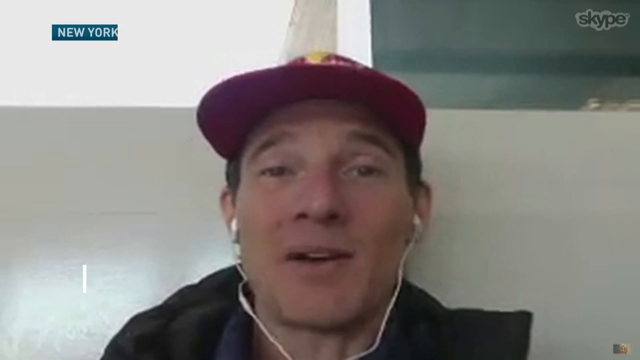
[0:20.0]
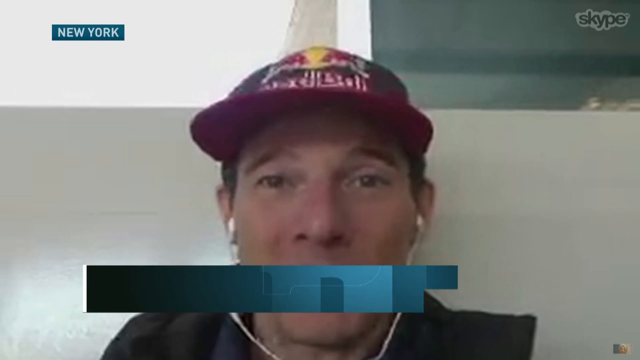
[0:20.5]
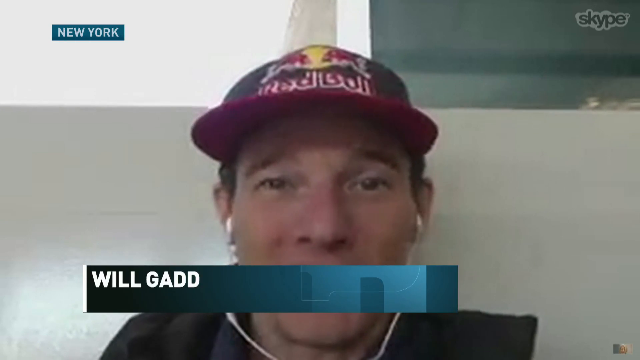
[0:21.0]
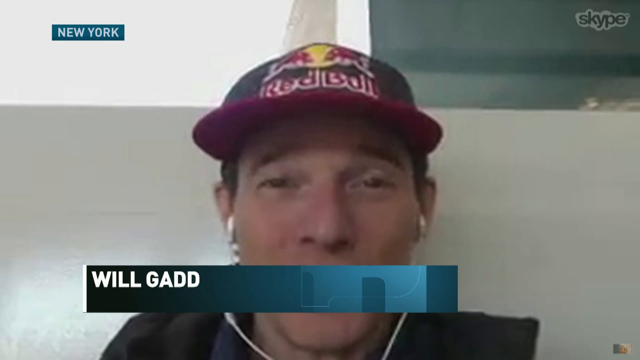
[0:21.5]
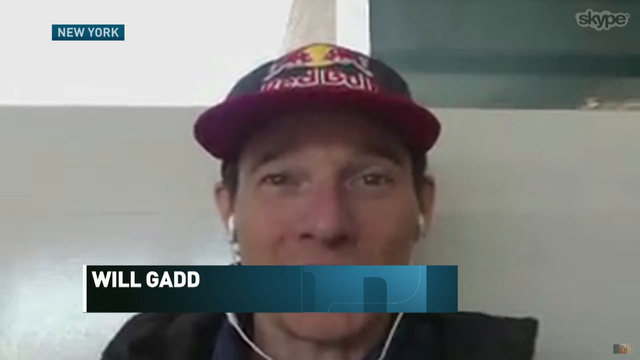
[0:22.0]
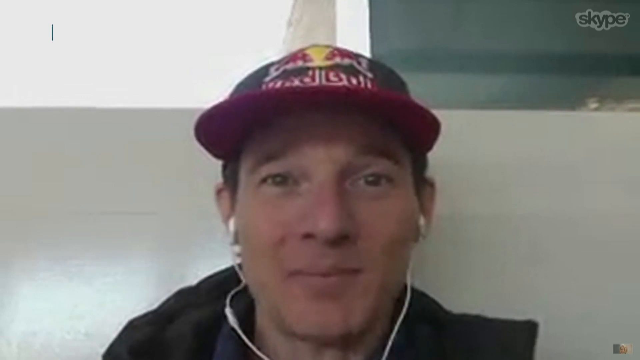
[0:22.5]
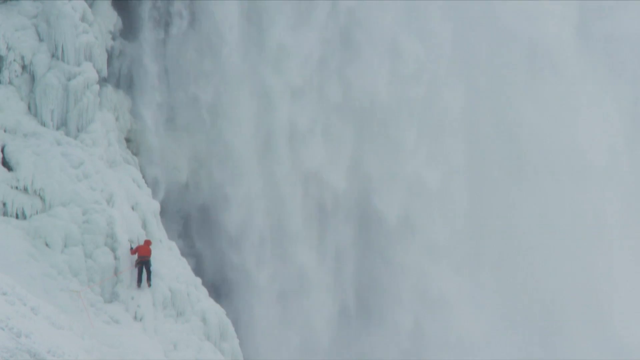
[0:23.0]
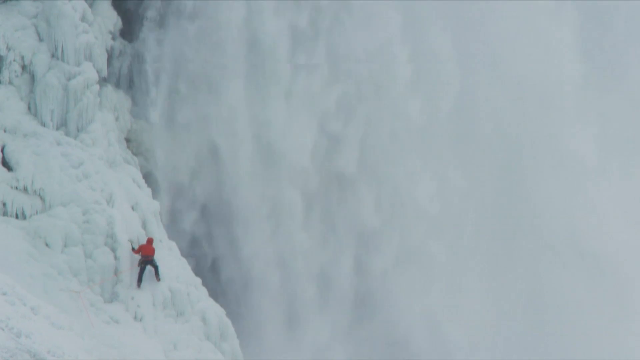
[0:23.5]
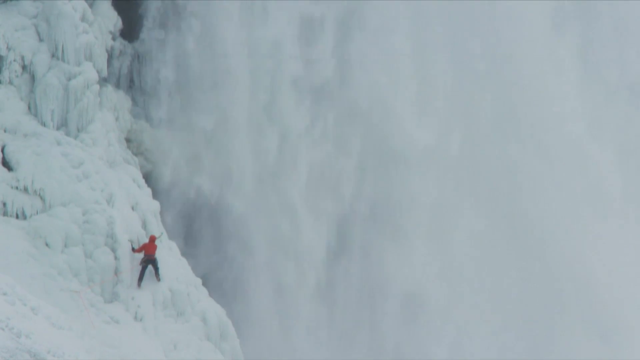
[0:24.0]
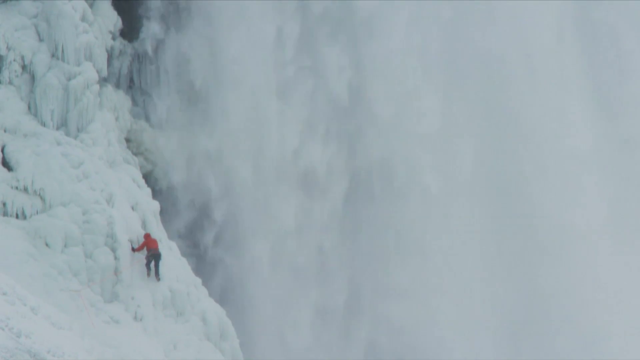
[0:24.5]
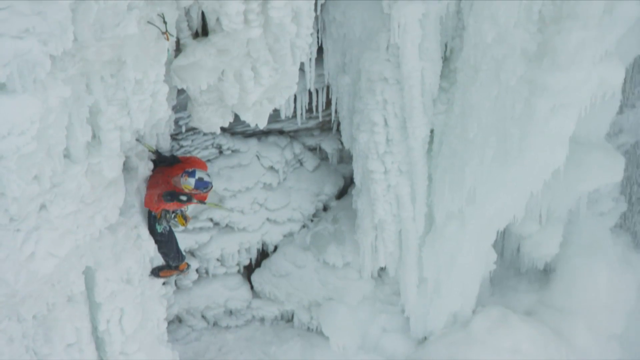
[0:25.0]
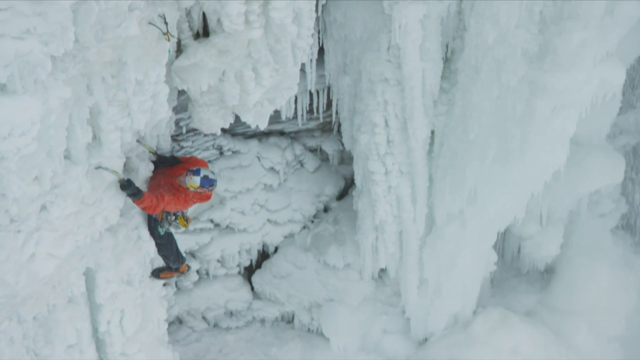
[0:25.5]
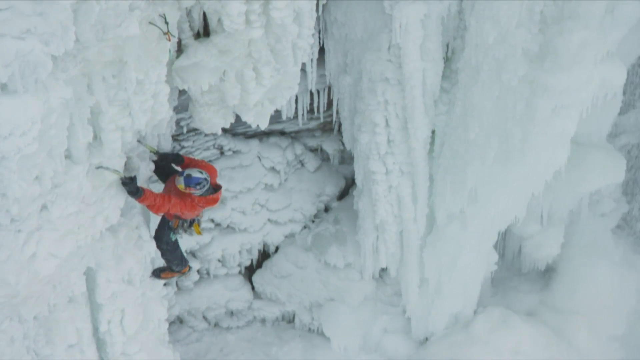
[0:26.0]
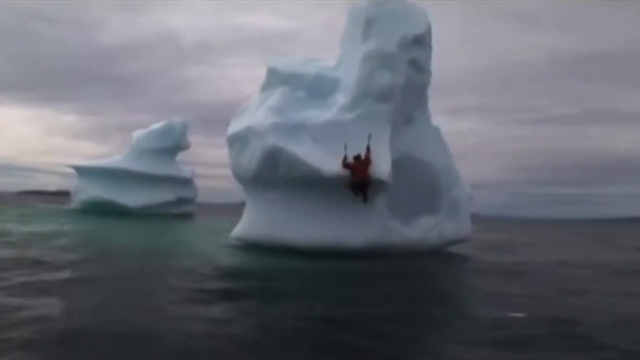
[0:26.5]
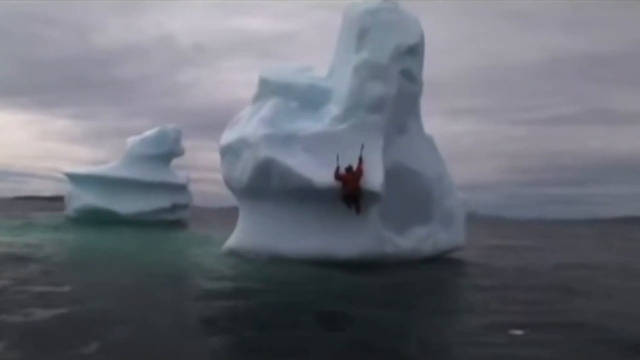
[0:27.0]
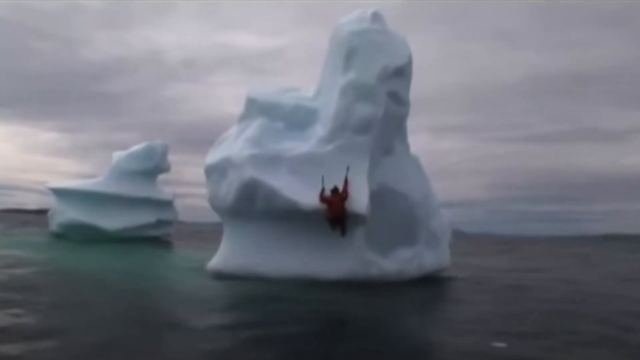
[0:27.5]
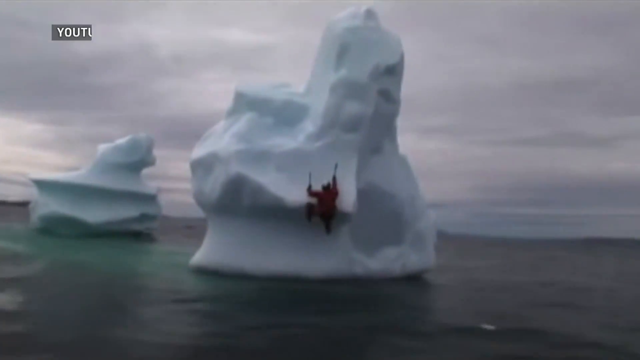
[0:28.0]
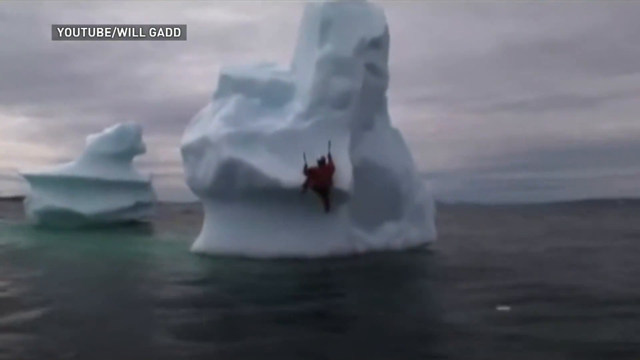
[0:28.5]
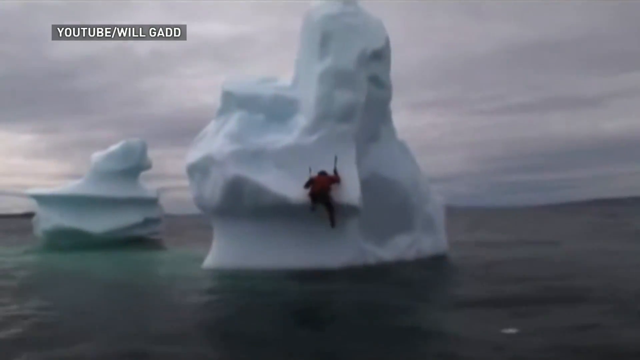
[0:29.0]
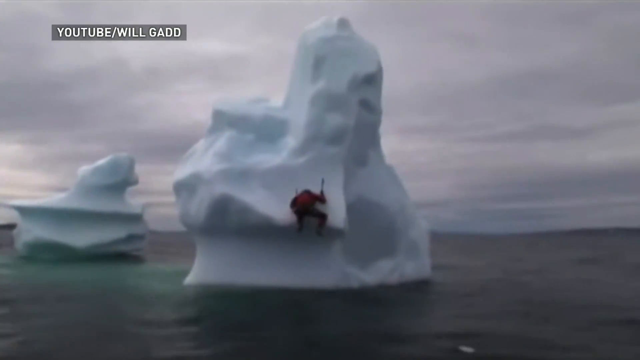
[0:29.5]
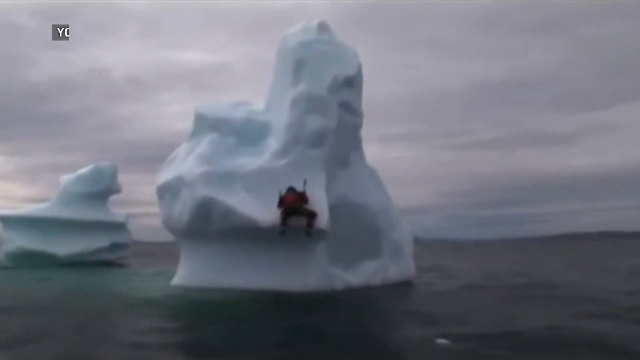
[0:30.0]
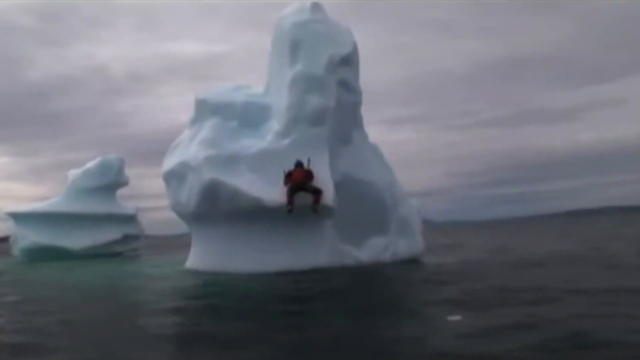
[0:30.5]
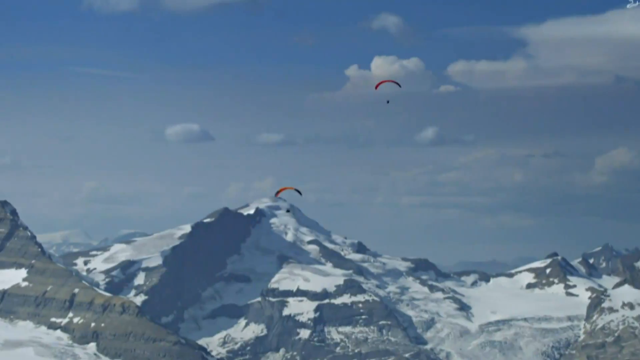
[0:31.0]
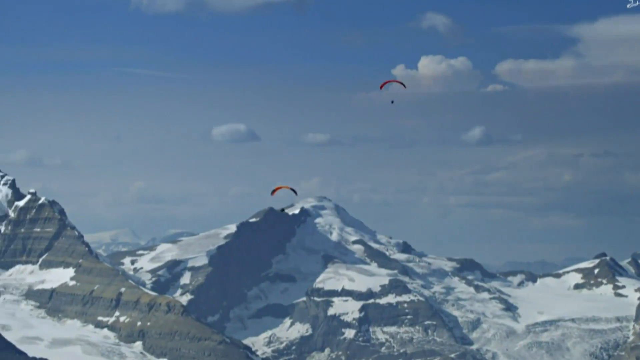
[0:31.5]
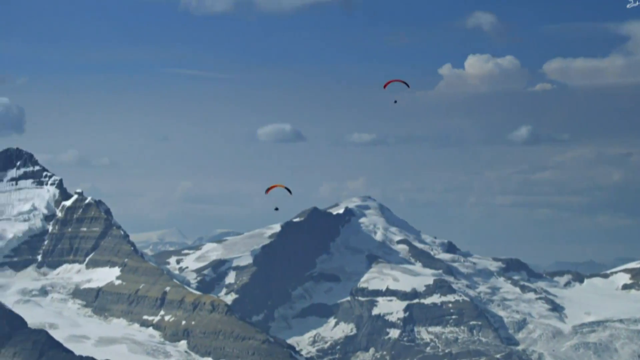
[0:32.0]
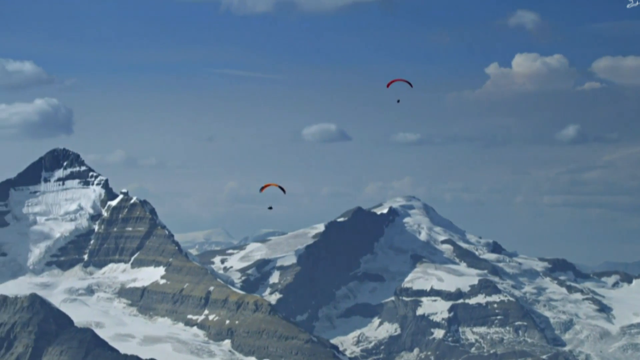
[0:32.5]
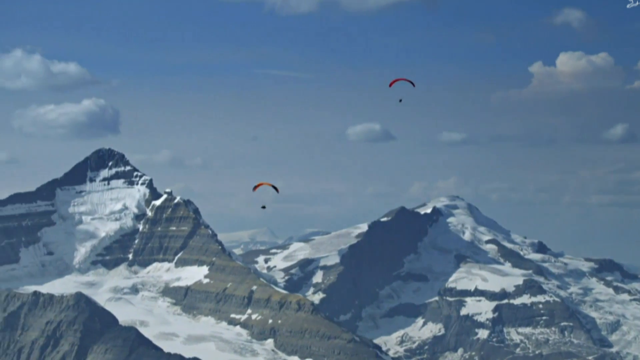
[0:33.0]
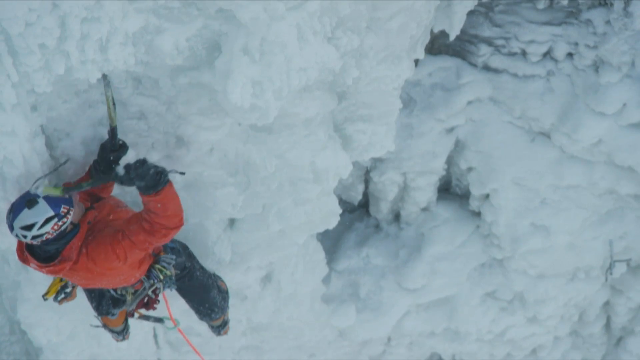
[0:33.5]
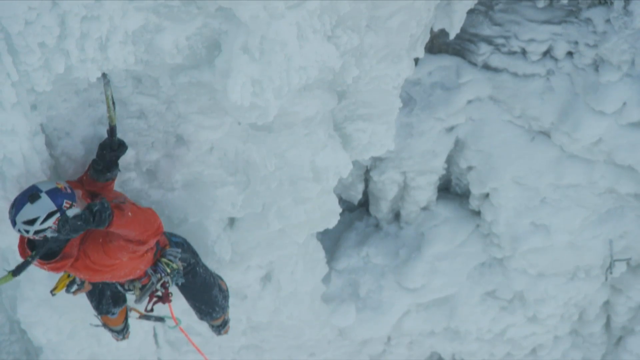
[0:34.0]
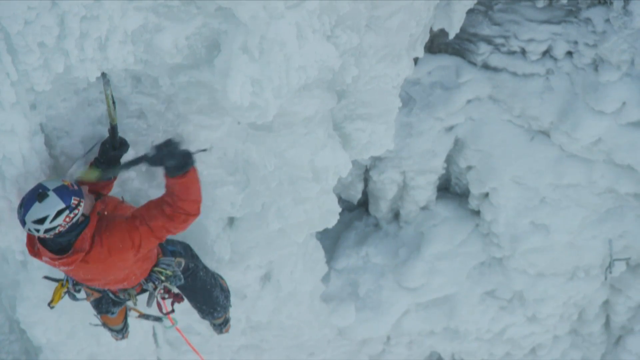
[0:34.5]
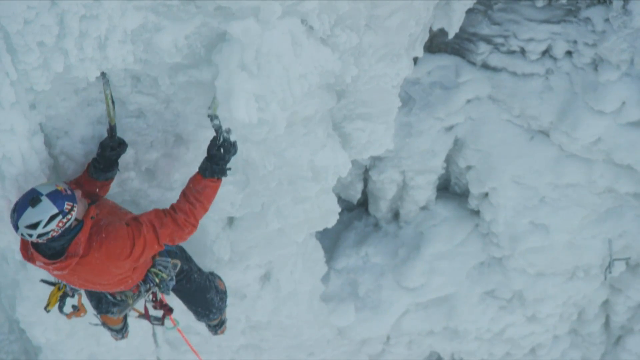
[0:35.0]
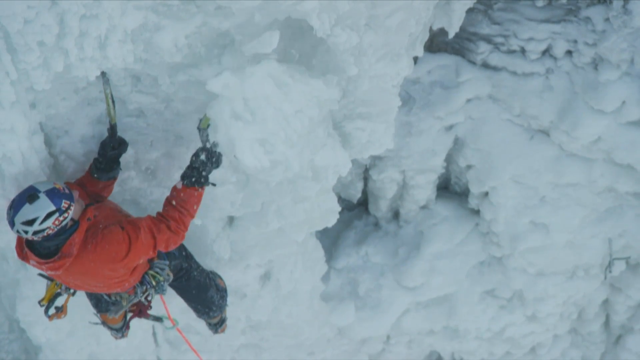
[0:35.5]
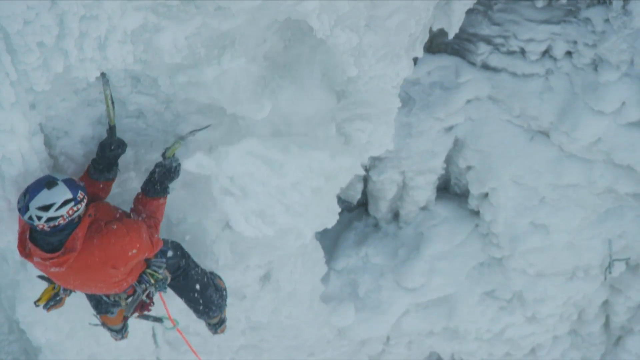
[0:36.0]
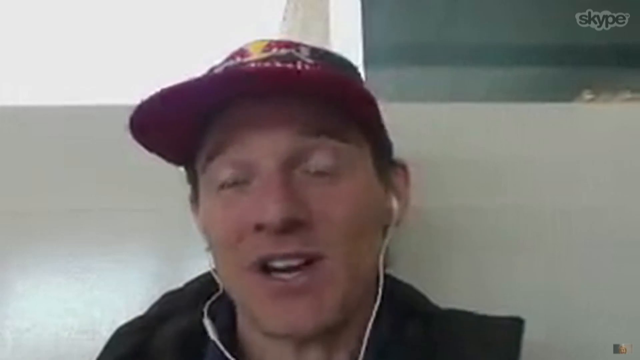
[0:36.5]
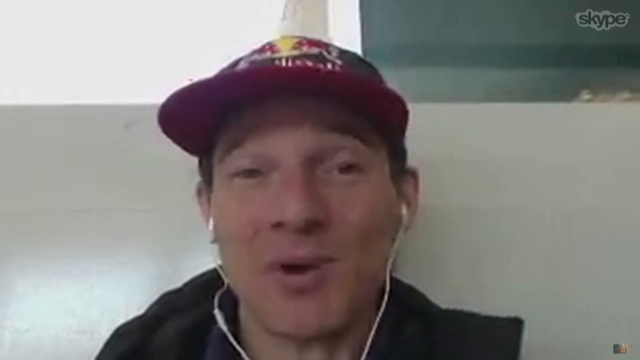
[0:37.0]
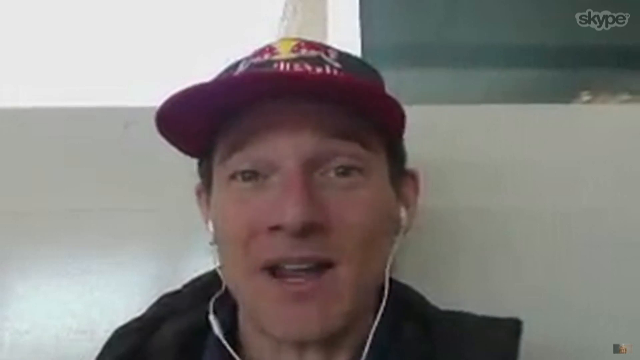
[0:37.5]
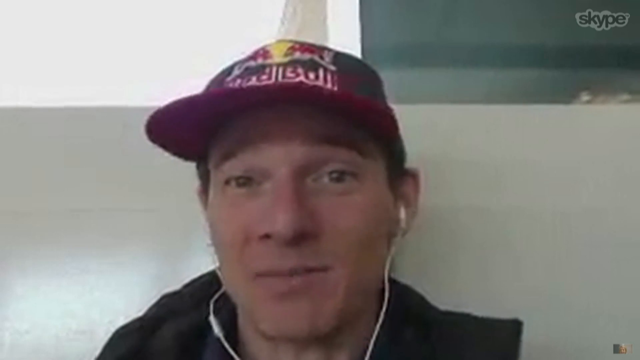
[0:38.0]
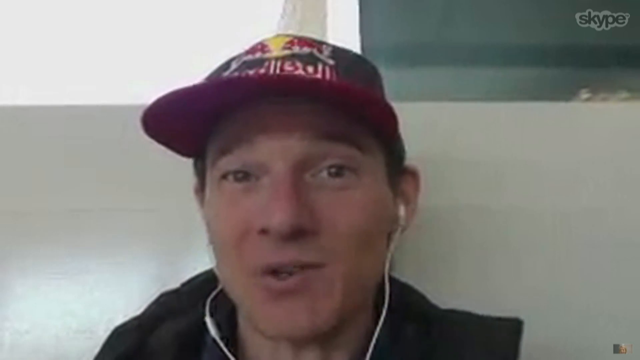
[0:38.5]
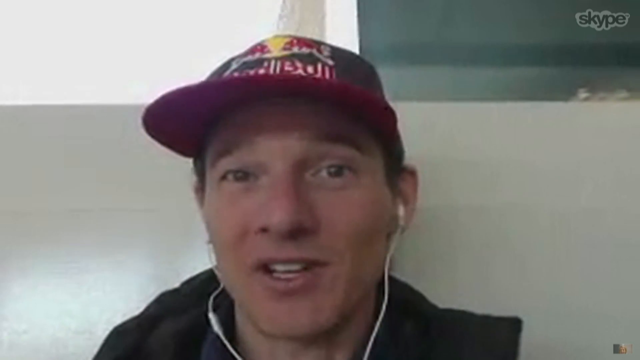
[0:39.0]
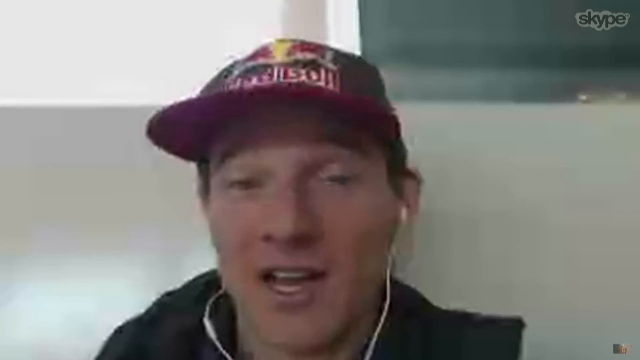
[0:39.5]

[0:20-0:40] The man in the red cap and black shirt is shown speaking. His name pops up below his face on the screen: "Will Gadd". The words "New York" are shown at the top left, and text at the top right apparently indicates he is on a Skype call. His hat has the words "Red Bull" on it, with a black top and a red brim. The shot goes back to an area with very big falls, presumably Niagara Falls. The man on the left goes slowly upward. Another angle shows white, frozen, icicle-like formations coming down. The man in the red jacket and dark pants is shown, and the top of his hat is visible: it is divided into quarters that alternate purple and white. In a different locale, the man in the red jacket uses sort of picks to climb carefully up what seems to be a small ice or snow formation in the center of a body of water. Another shot shows two people parasailing in an area with many snowy crests and mountains, with gray granite-like rock visible in places where there is no snow.